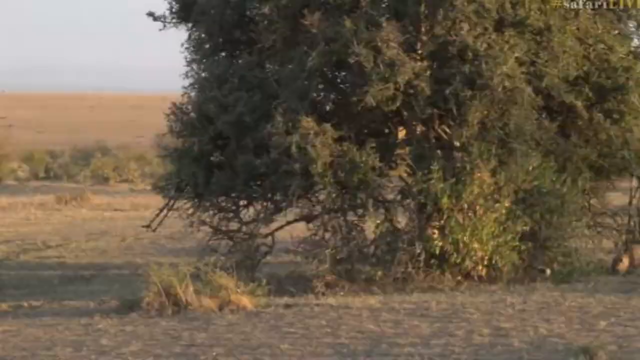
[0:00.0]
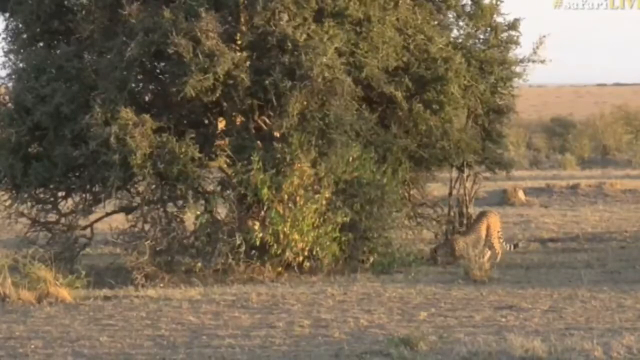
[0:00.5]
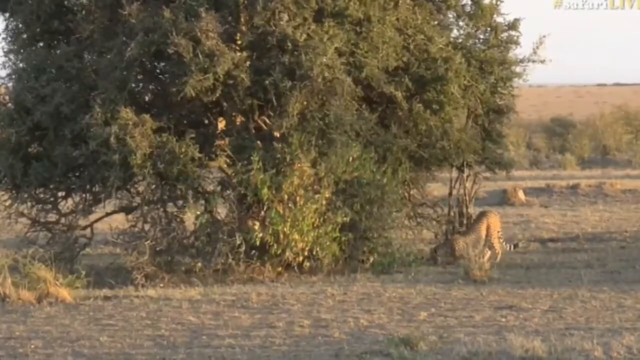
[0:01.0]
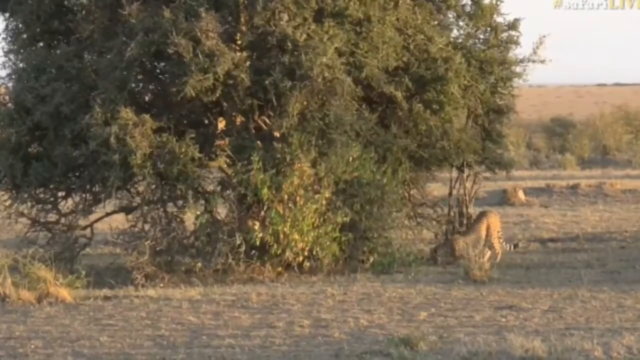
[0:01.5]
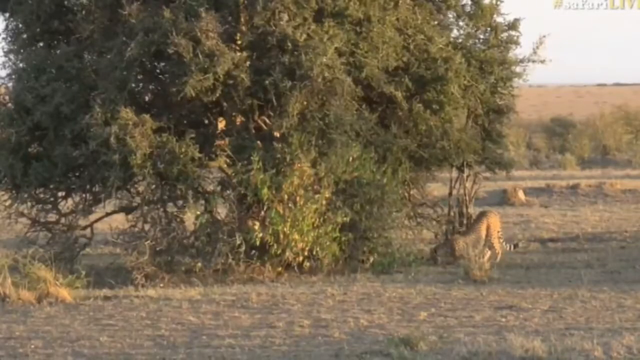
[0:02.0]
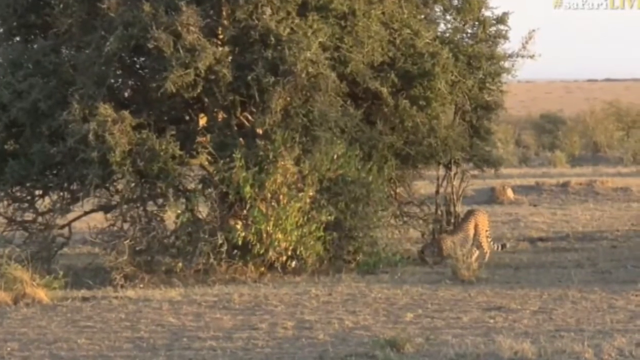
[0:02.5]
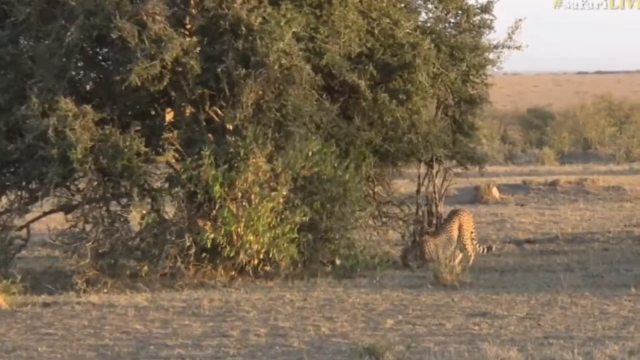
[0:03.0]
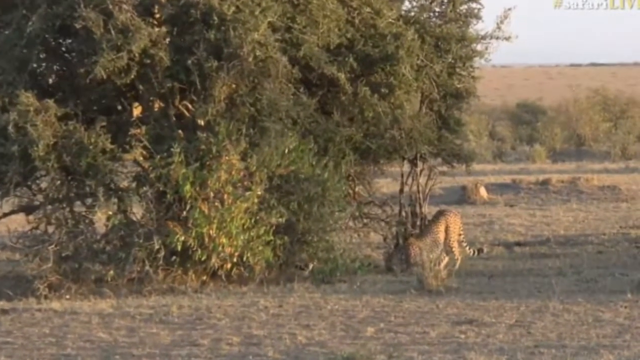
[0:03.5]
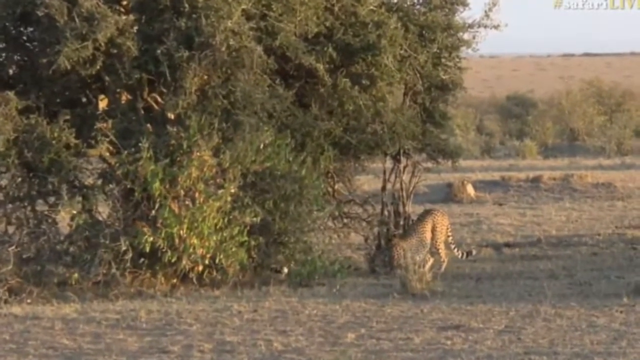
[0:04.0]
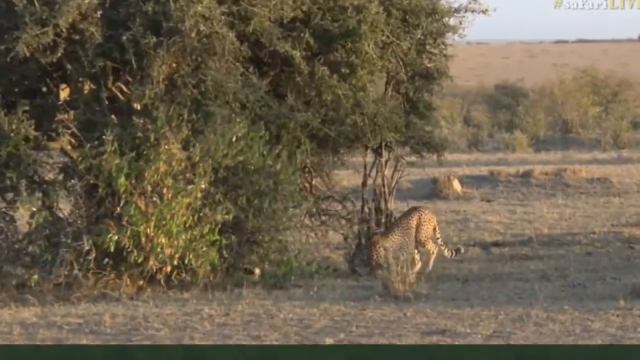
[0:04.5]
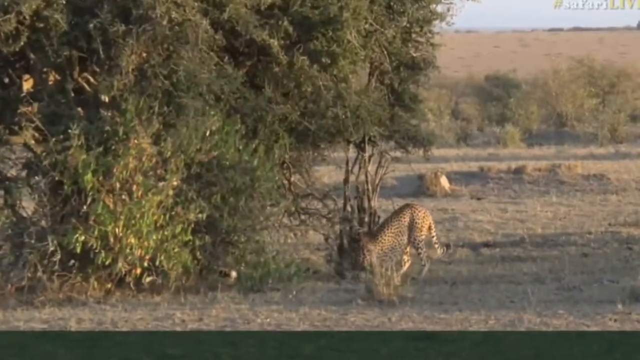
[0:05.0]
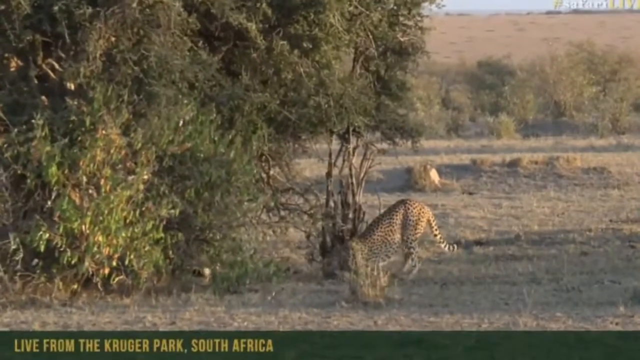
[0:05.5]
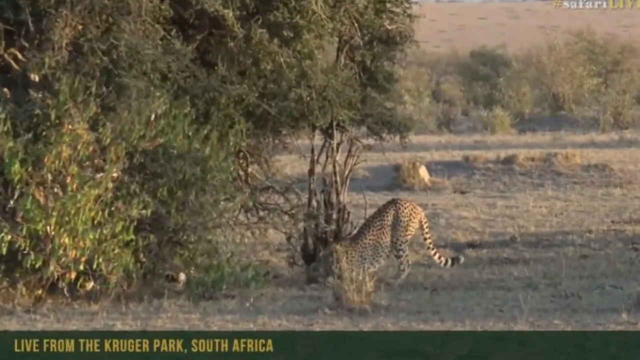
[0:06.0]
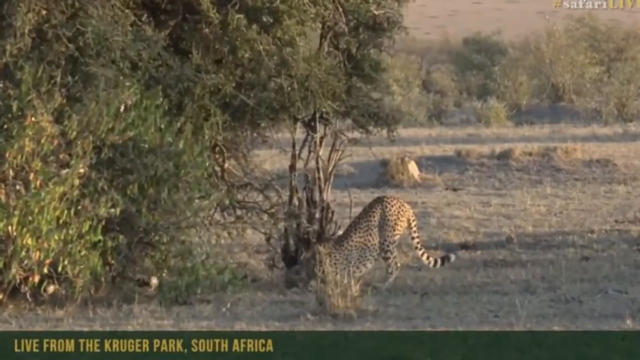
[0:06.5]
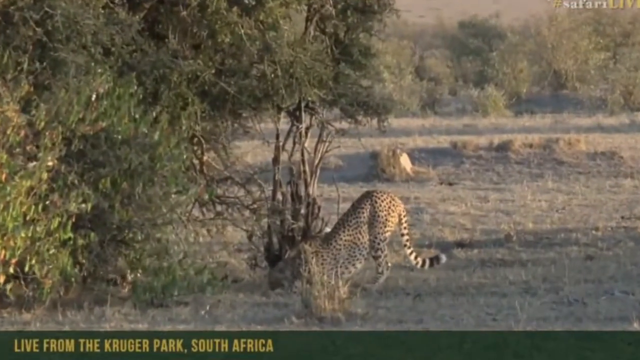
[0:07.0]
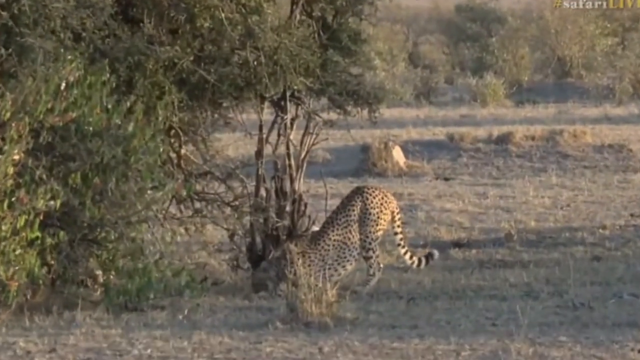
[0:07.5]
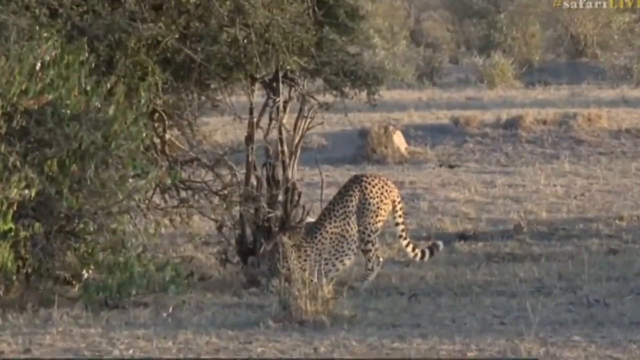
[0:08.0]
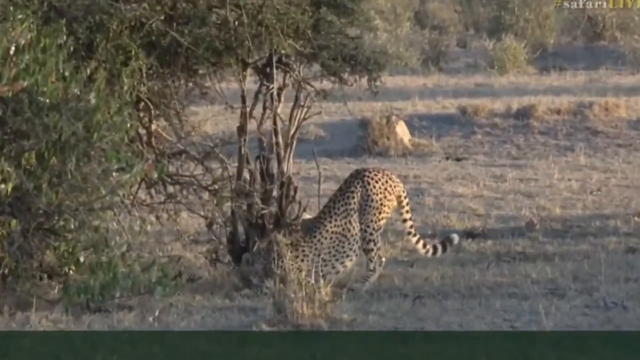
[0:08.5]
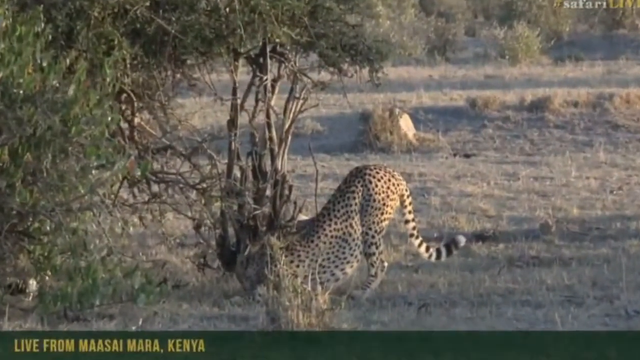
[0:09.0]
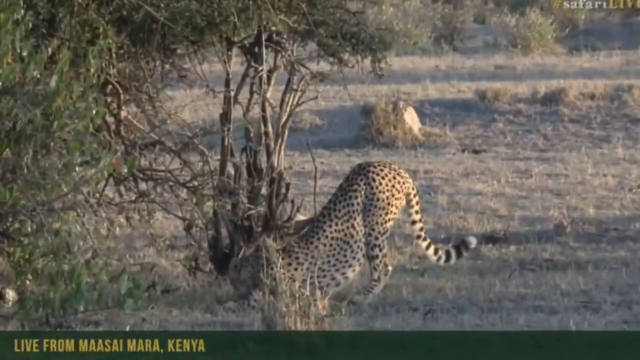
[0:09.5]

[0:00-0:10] A large tract of land with small bushes appears, and the camera zooms in and focuses on one spot. A cheetah is there, maybe eating something, with a thick bush beside it, and there is another animal there as well. In the background are a large tract of land and some small bushes, and the area looks like a grassland with open space. The camera zooms in to concentrate on the cheetah, which seems focused on something; it looks like it may be feasting on meat as it moves and struggles. The video apparently comes from Masai Mara in Kenya.